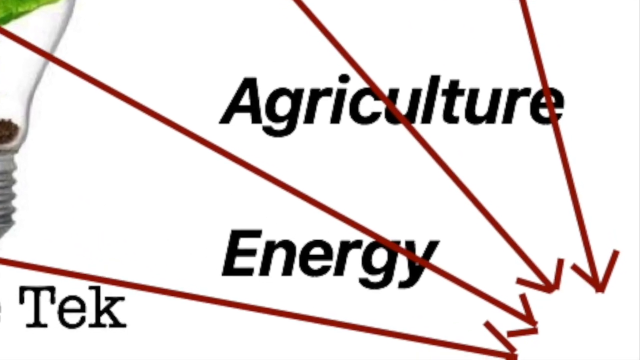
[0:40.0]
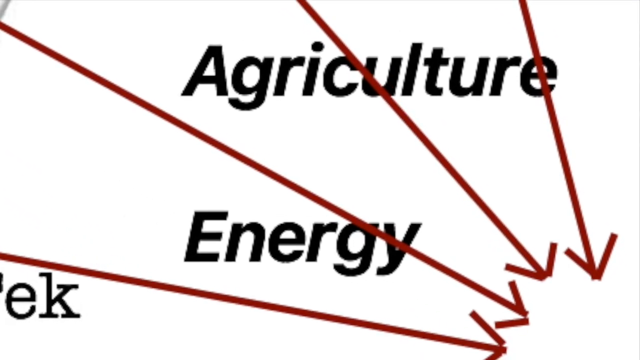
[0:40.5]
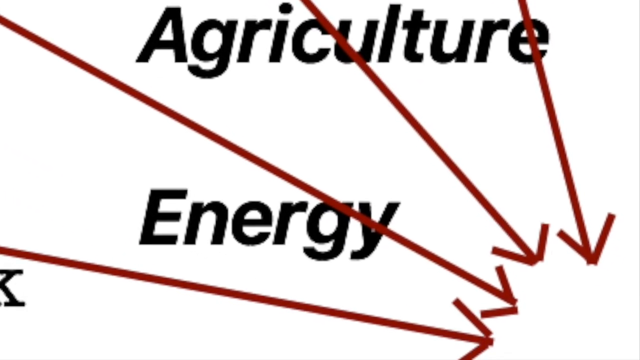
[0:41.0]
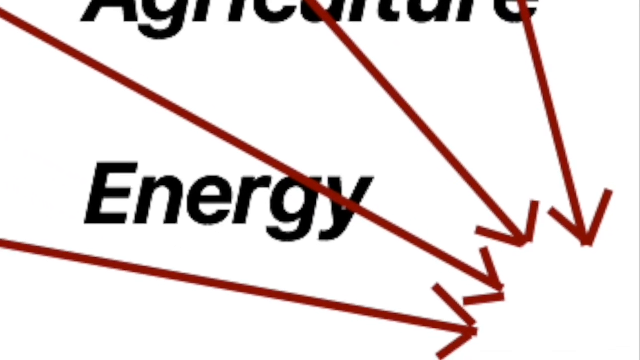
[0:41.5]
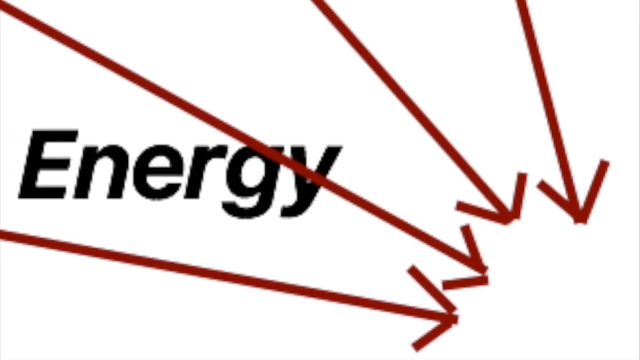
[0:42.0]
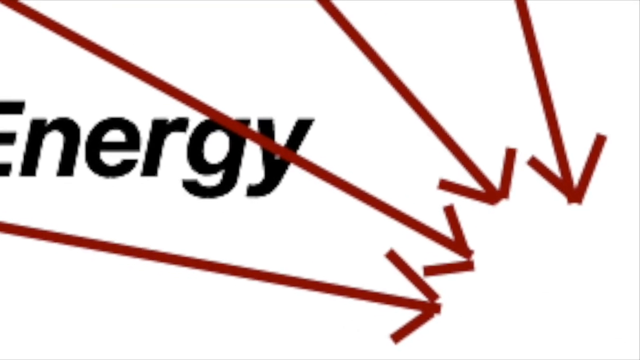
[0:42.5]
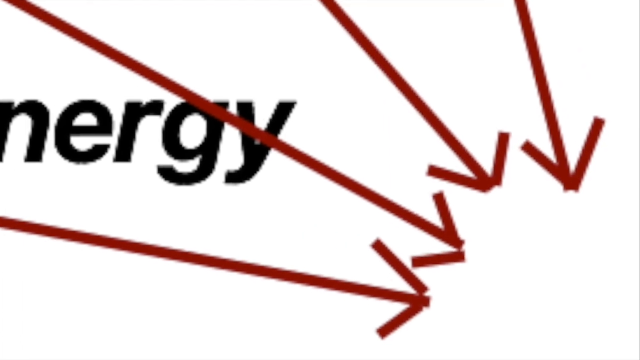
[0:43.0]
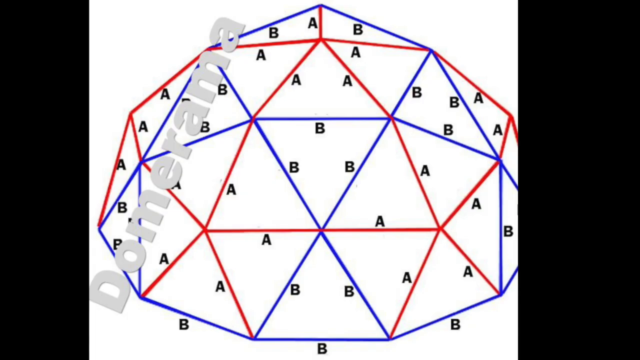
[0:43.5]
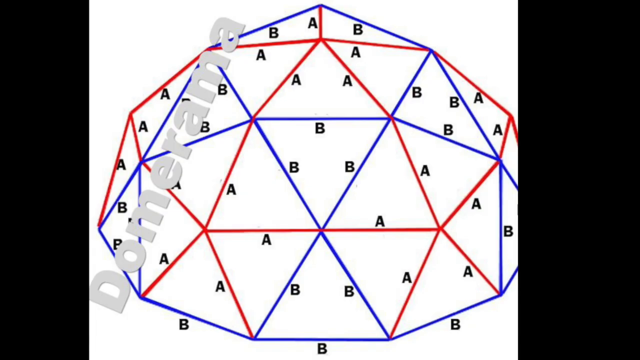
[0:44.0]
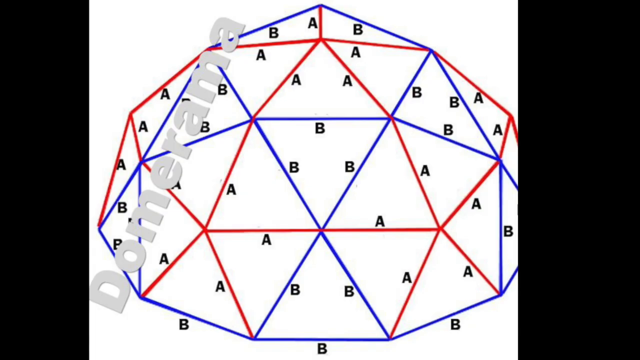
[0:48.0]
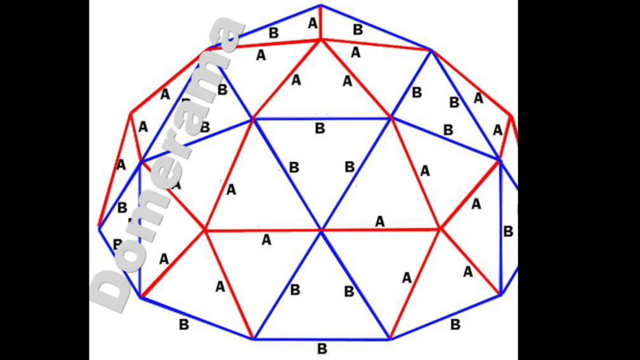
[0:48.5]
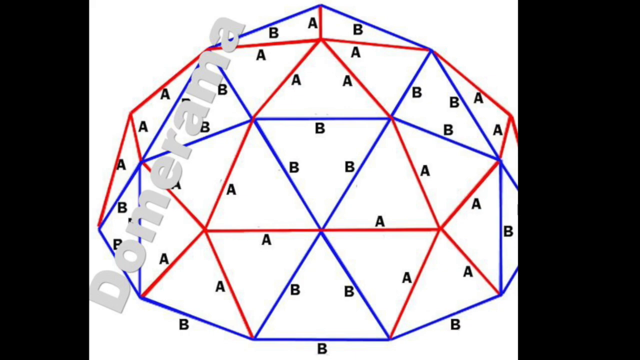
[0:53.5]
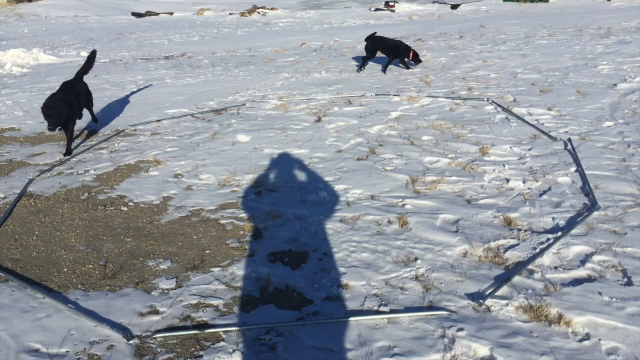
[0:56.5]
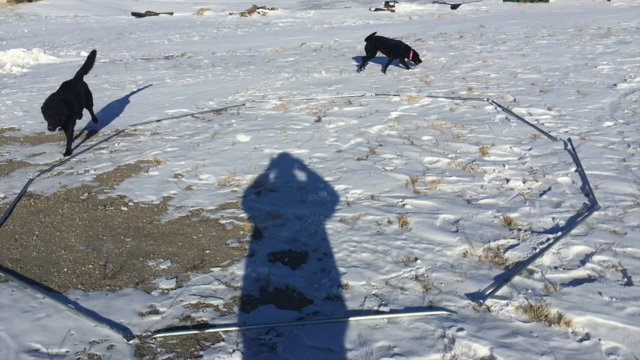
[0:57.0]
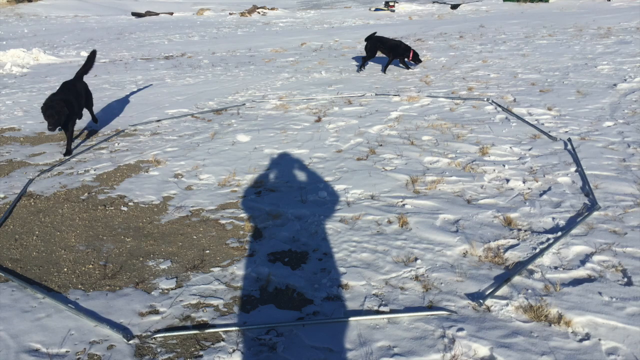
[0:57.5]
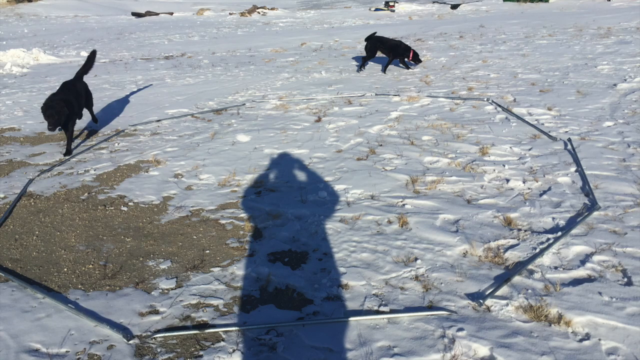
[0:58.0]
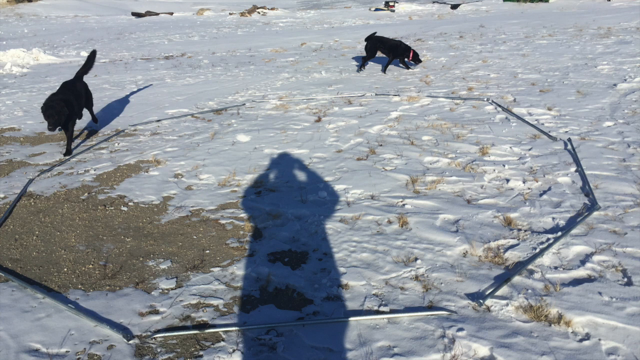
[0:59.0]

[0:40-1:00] The project comes into view: a structure that looks like playground equipment, sort of a climbing toy, or possibly a dome, perhaps to be used as a greenhouse. The metal pieces seen earlier appear to be in the process of being assembled into this kind of dome structure out in the snow.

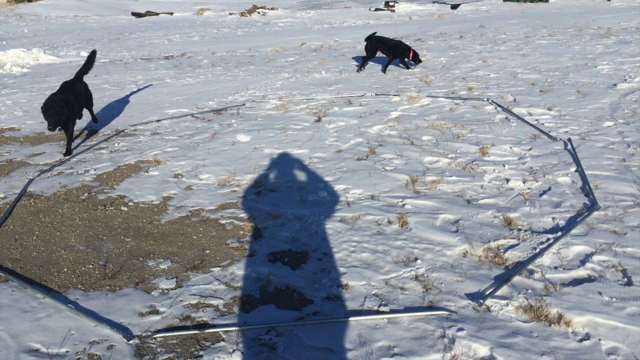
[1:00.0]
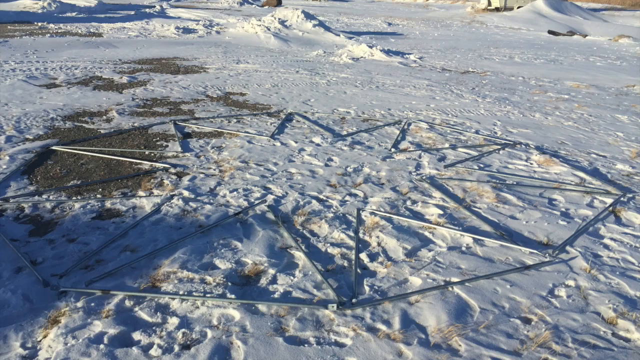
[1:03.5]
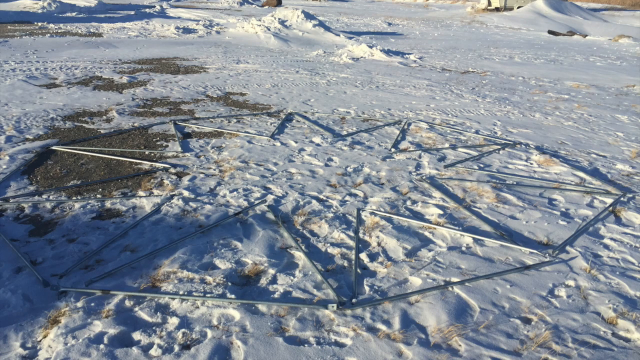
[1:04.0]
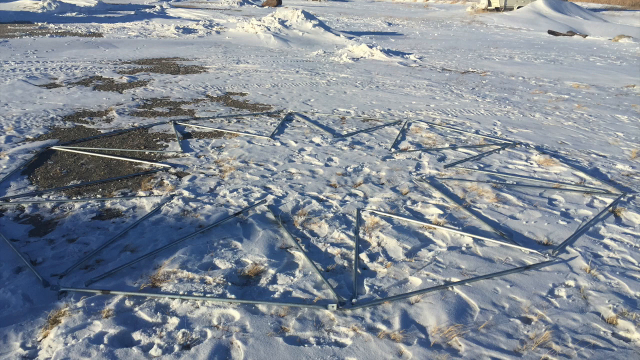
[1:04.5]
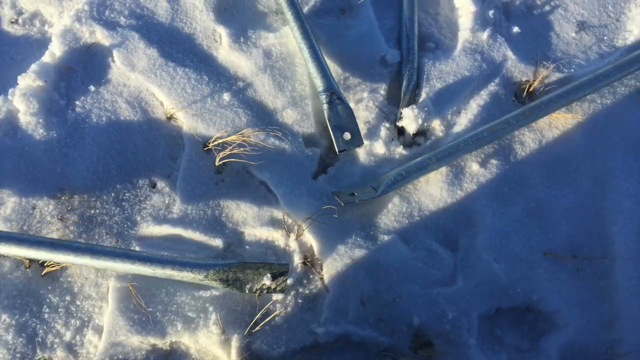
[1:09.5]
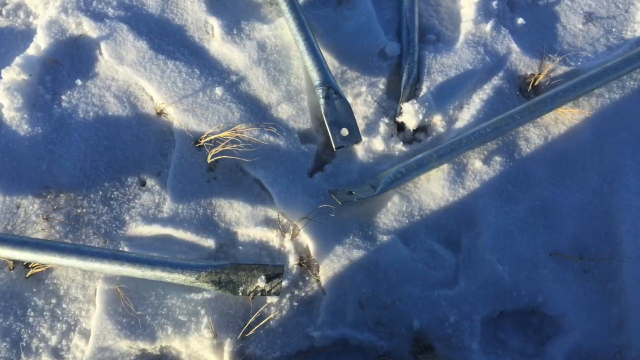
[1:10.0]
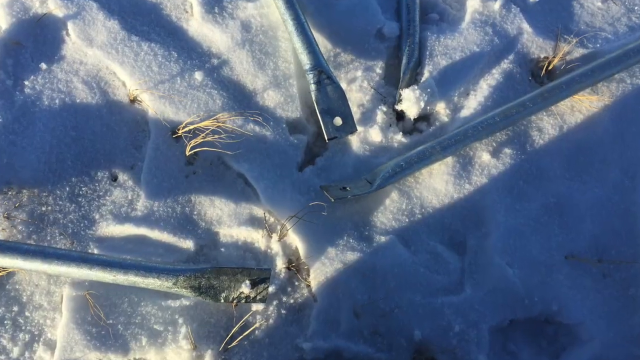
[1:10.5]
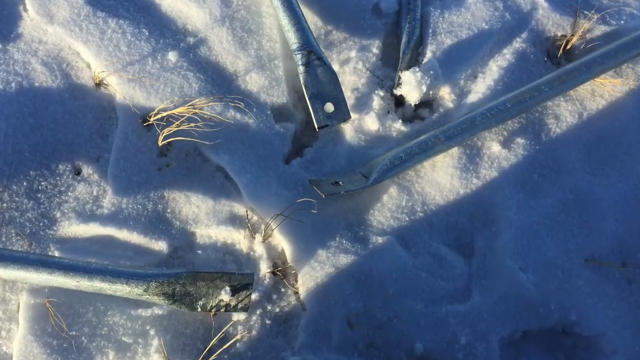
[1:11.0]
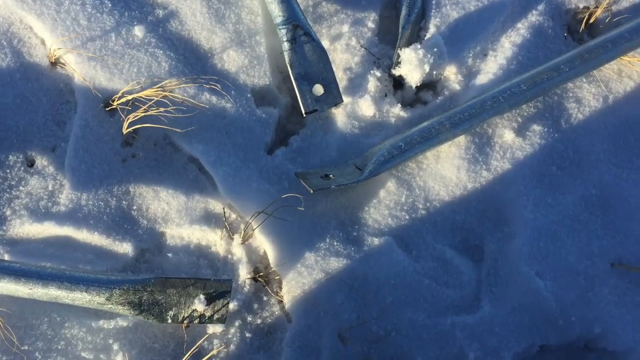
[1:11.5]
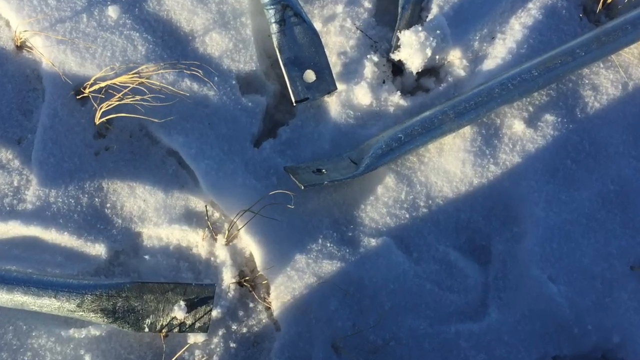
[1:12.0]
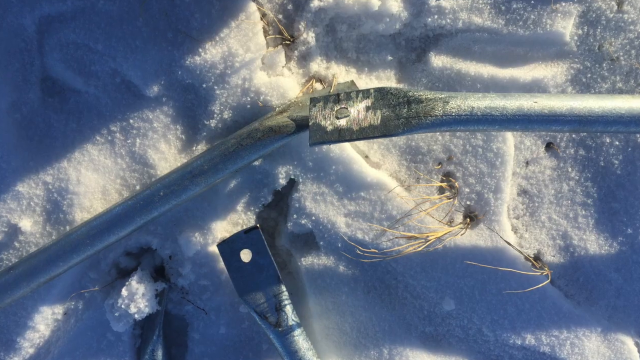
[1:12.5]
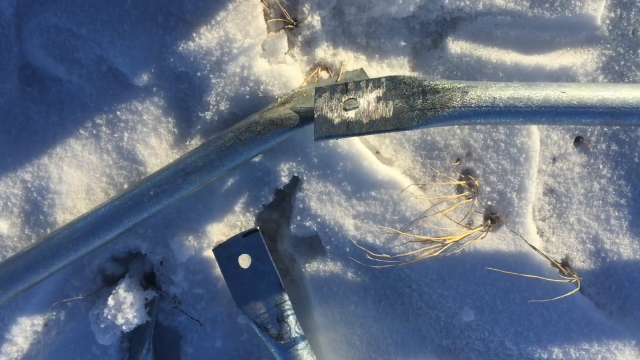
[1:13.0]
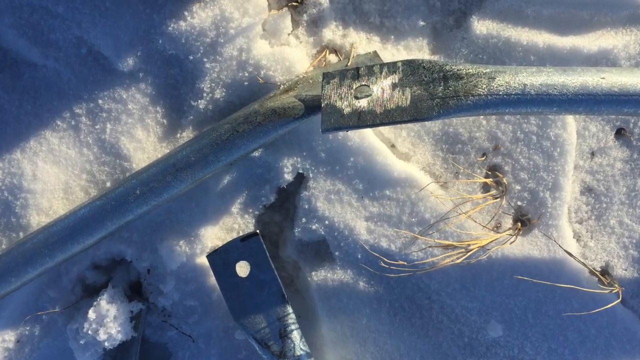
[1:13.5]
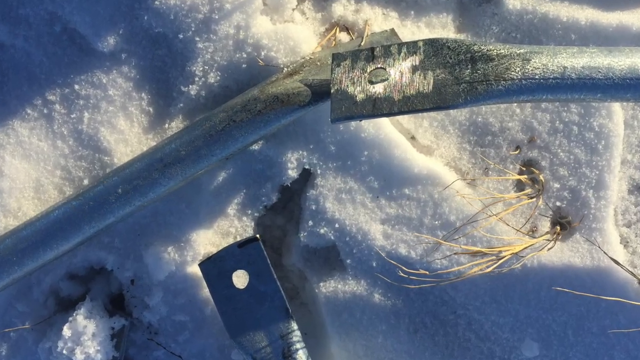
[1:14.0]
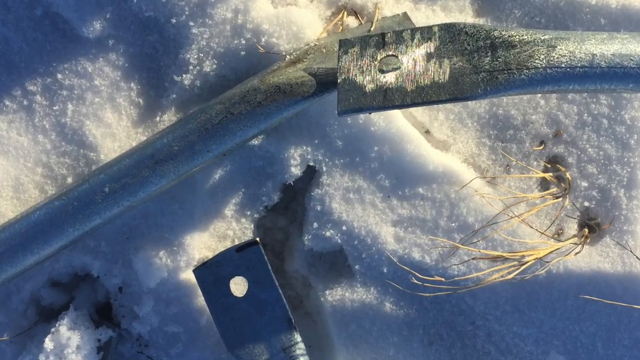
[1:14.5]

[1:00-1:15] The scene is outside in the snow. The bottom of the dome appears to have been assembled, and more parts have been added. The poles connect through the holes in their ends. Two black dogs are in the picture, and there is snow on the ground.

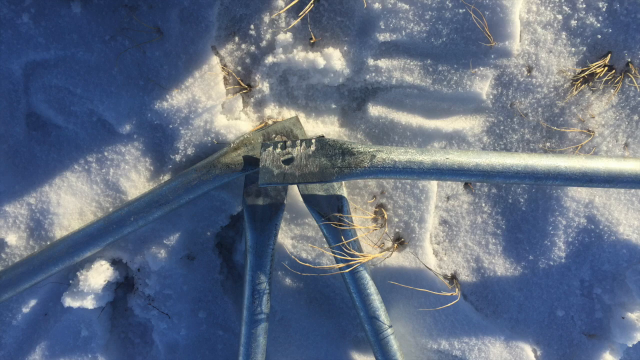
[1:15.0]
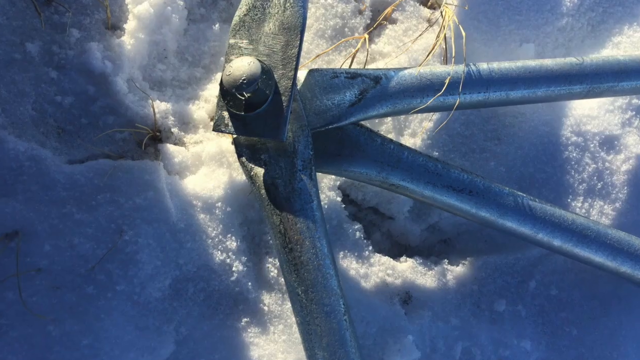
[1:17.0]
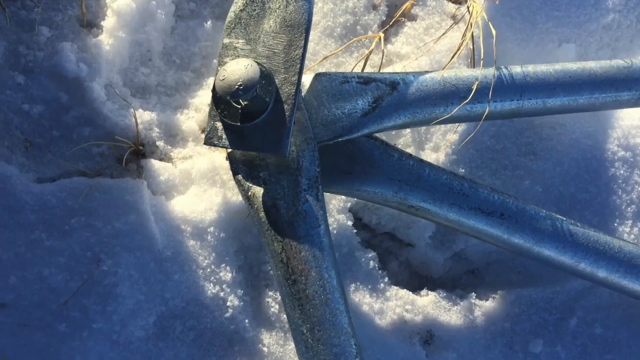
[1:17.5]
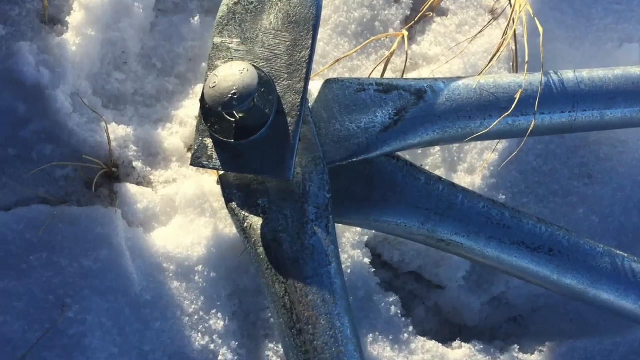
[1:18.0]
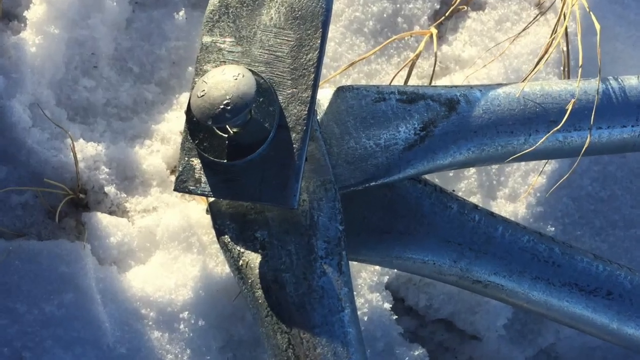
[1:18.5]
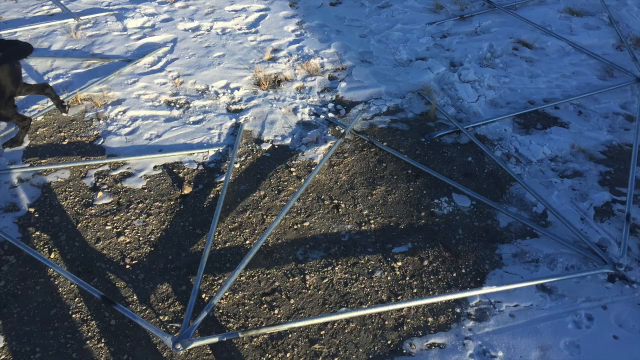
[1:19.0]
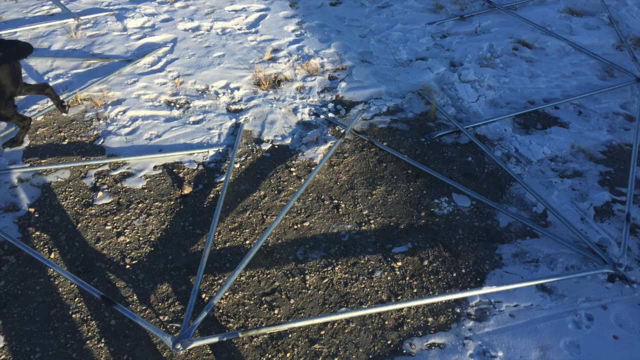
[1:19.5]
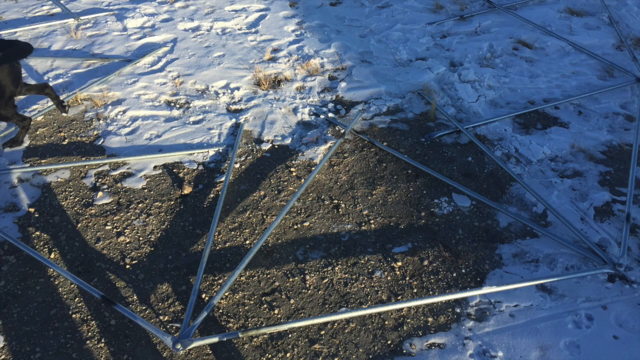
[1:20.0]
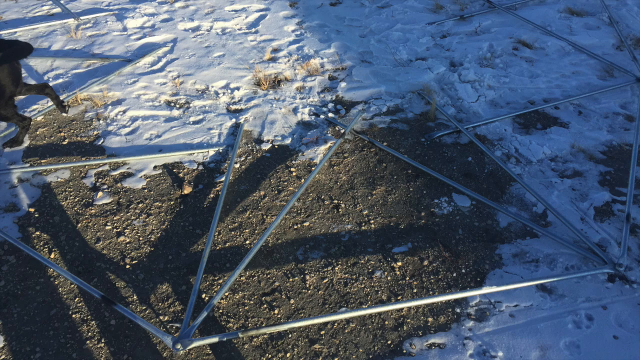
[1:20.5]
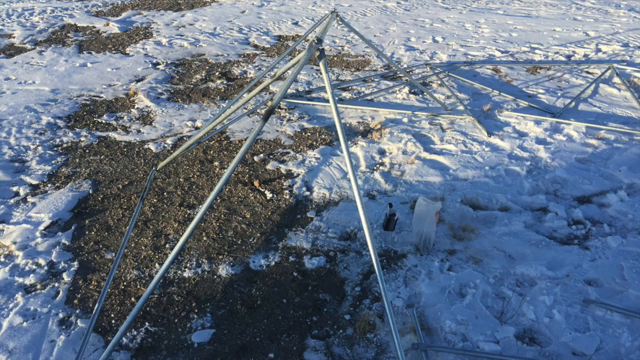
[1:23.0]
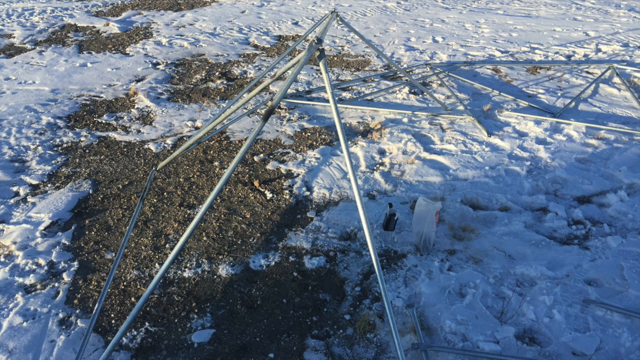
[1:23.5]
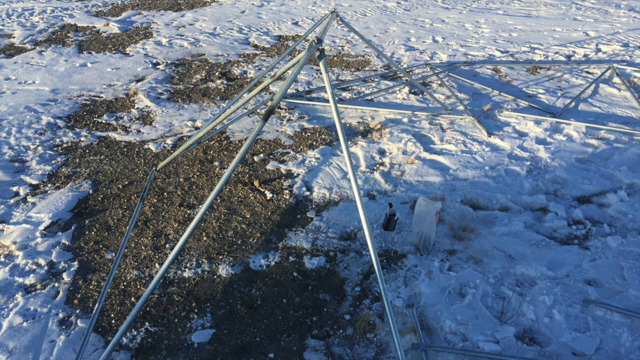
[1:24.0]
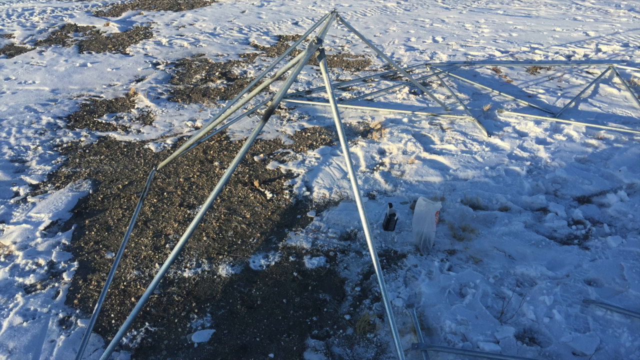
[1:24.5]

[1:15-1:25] The lower level of the structure is starting to come together as poles are attached. Three poles are attached at each joint, fastened with a bolt. The sun is not as bright as before, so it is perhaps evening. Snow is still on the ground, it looks very cold, and many boot prints or footprints are visible in the snow, suggesting apparently several people have been working on the project.